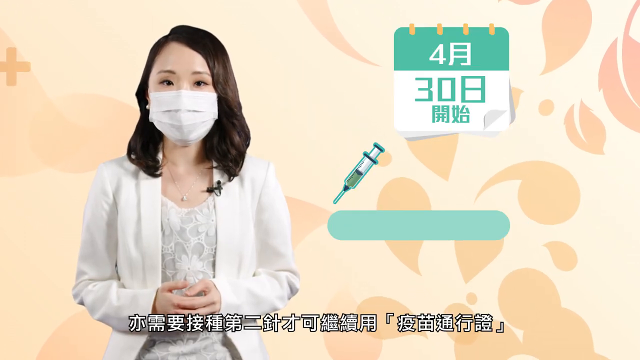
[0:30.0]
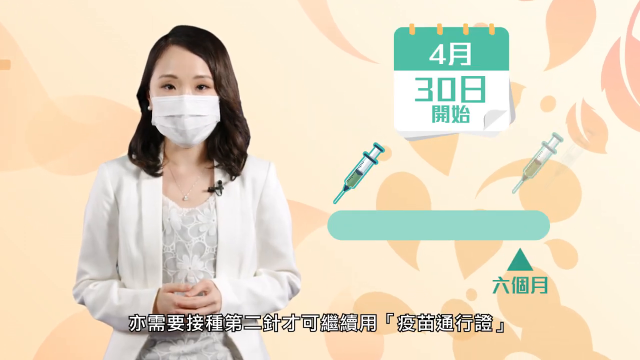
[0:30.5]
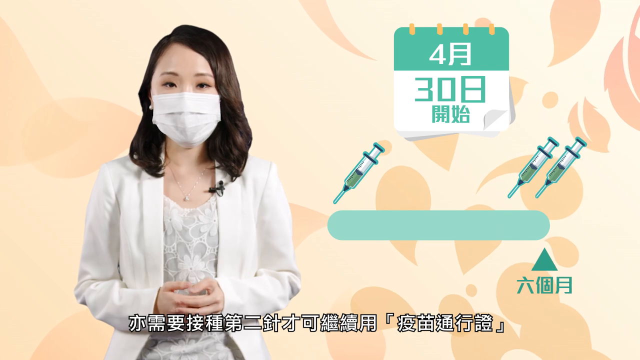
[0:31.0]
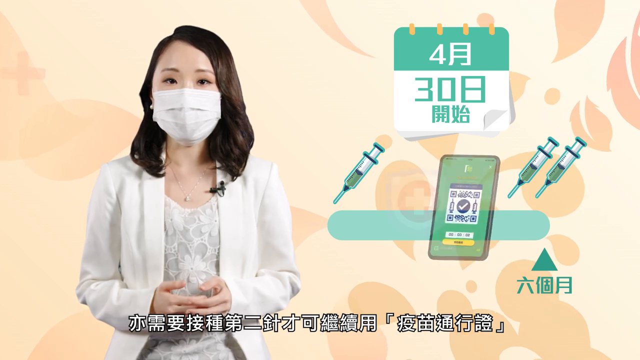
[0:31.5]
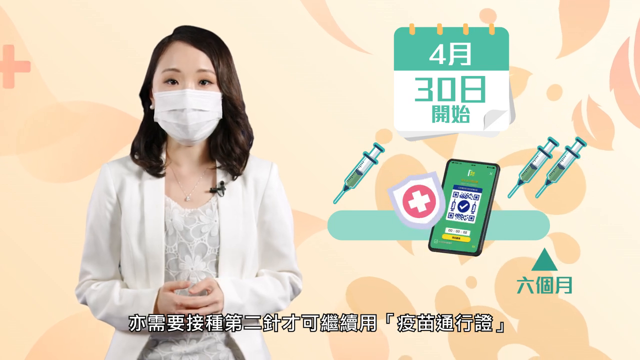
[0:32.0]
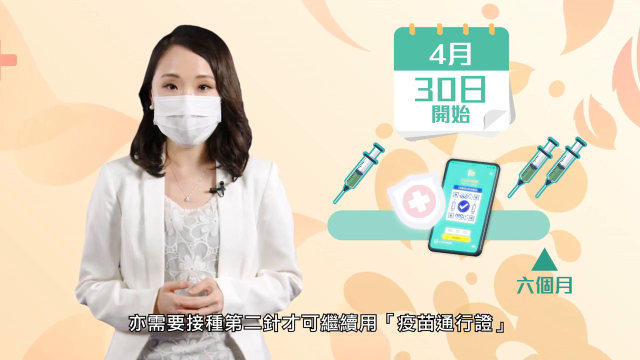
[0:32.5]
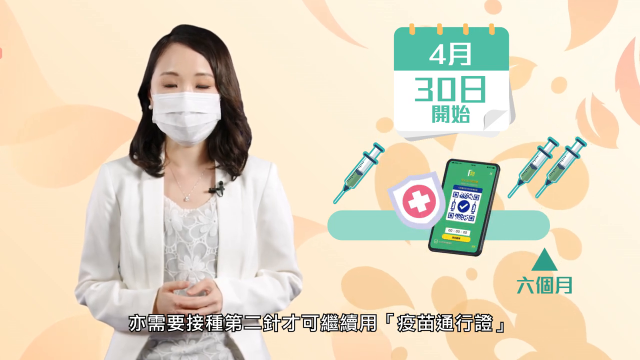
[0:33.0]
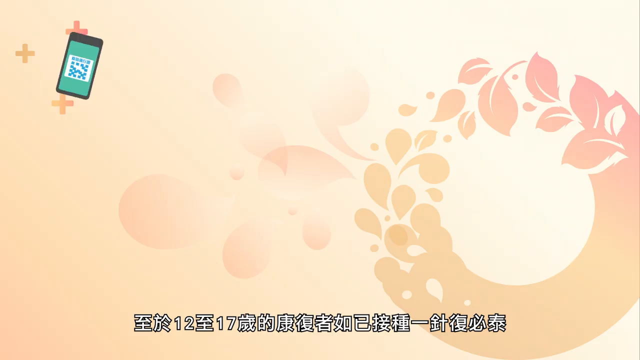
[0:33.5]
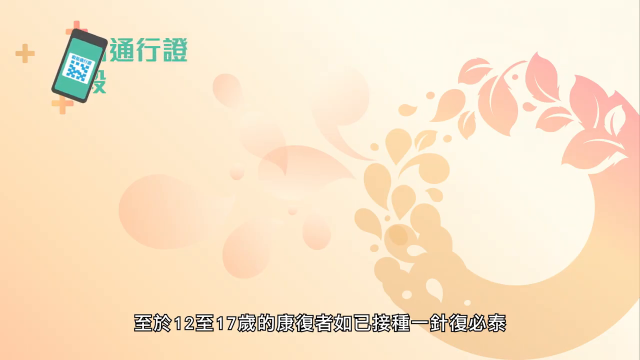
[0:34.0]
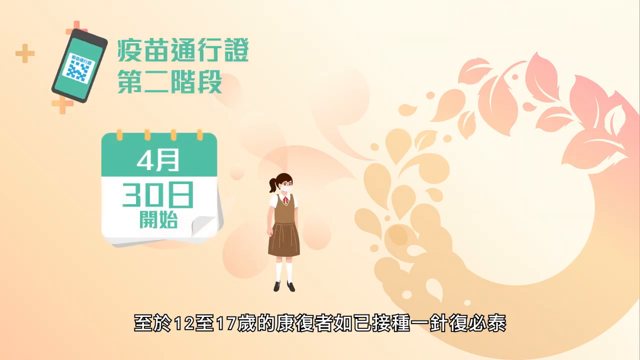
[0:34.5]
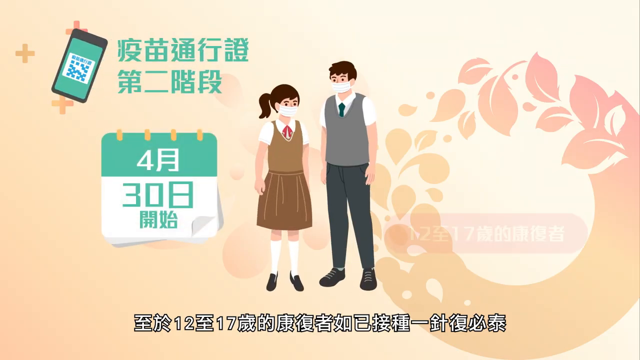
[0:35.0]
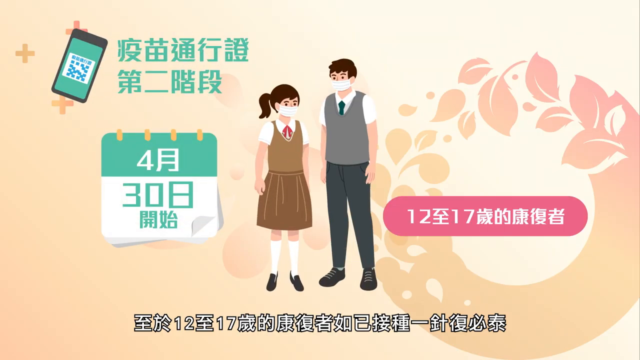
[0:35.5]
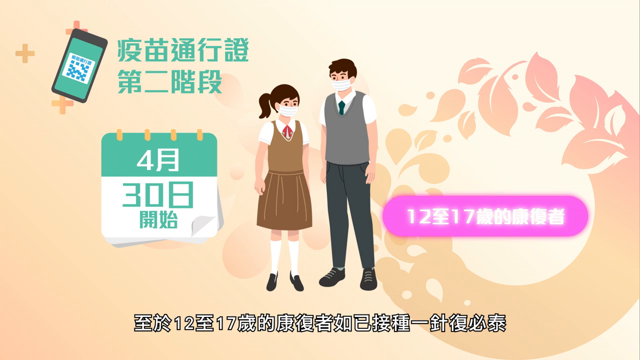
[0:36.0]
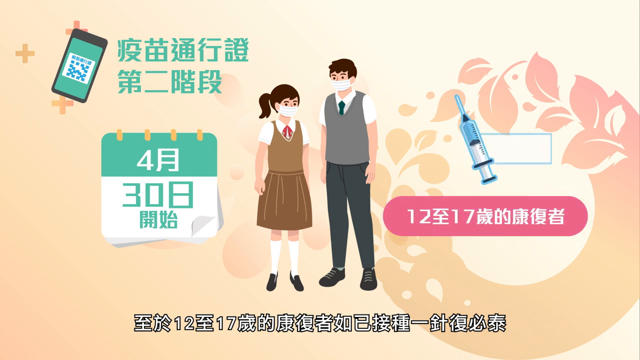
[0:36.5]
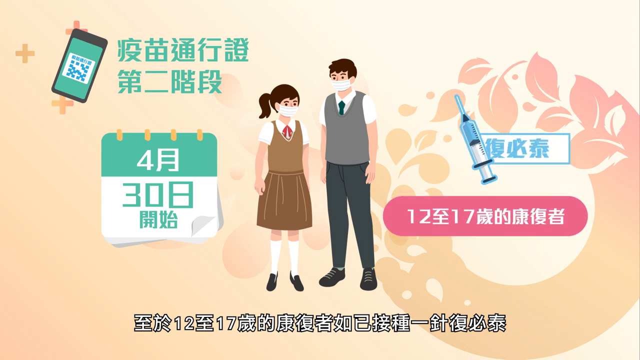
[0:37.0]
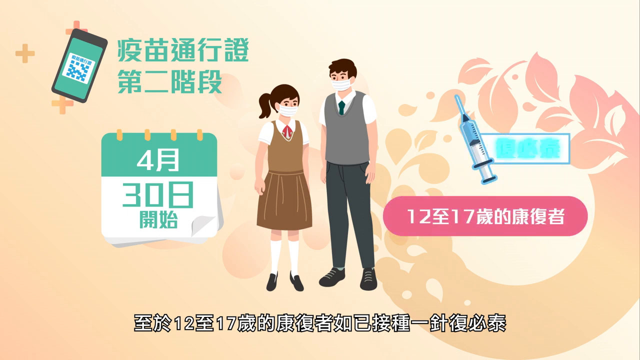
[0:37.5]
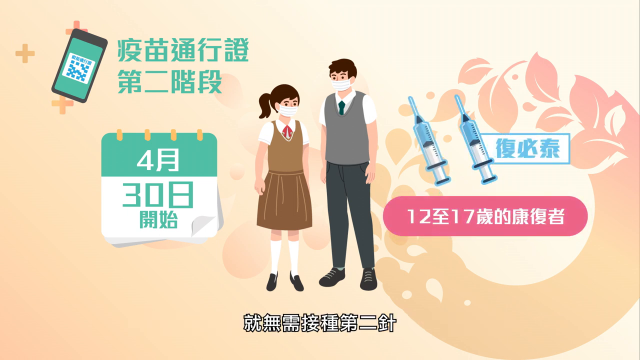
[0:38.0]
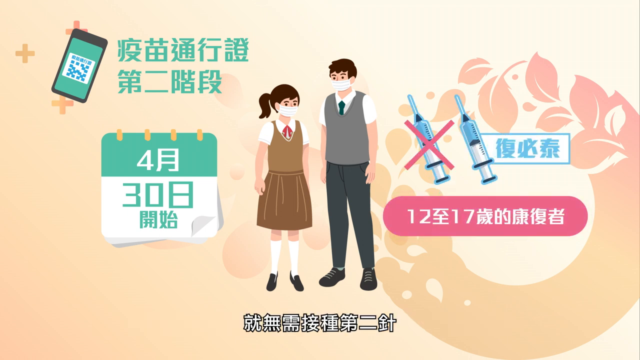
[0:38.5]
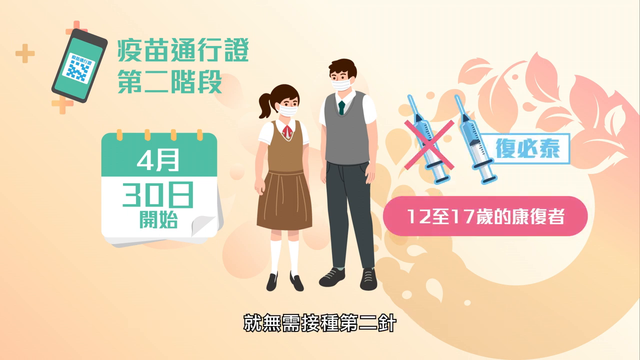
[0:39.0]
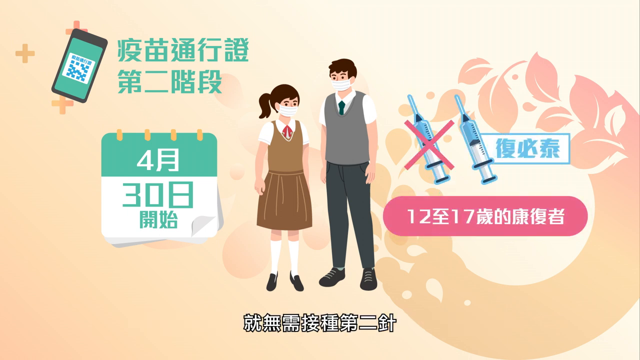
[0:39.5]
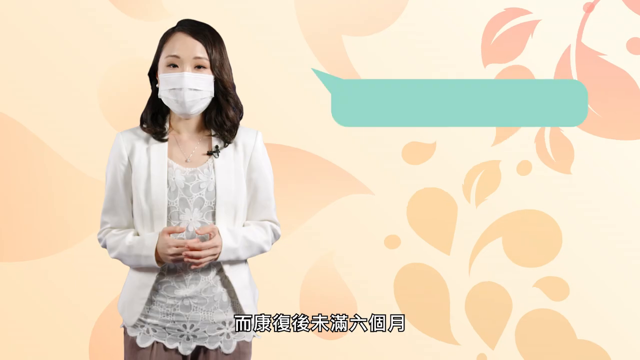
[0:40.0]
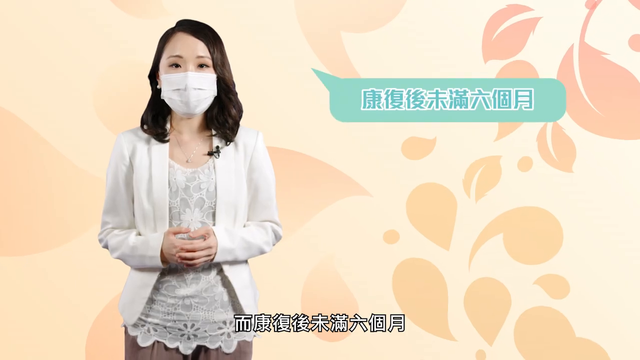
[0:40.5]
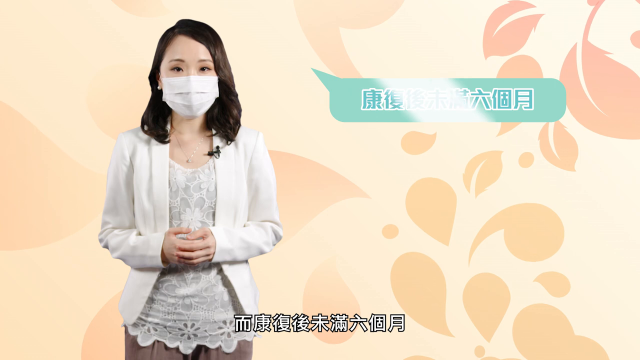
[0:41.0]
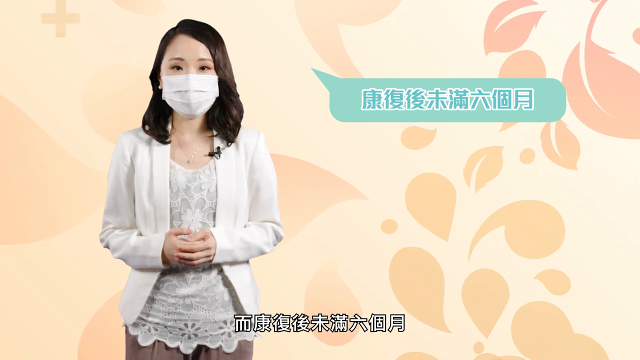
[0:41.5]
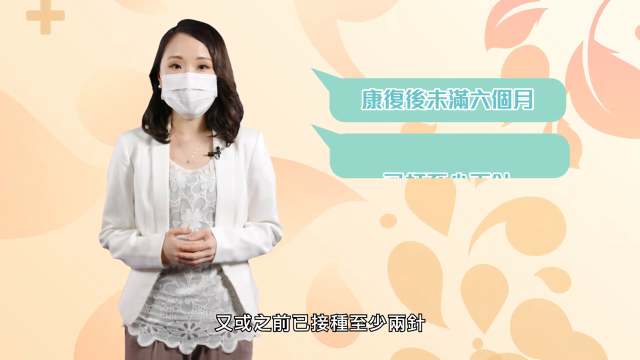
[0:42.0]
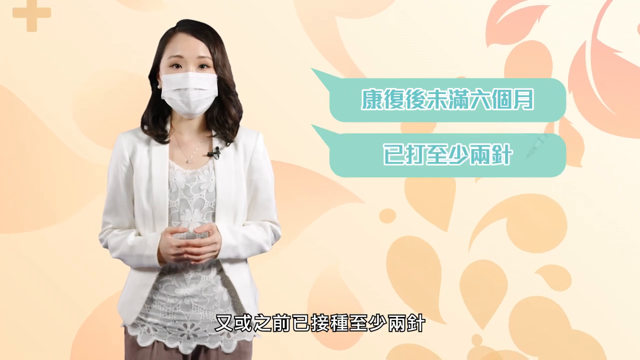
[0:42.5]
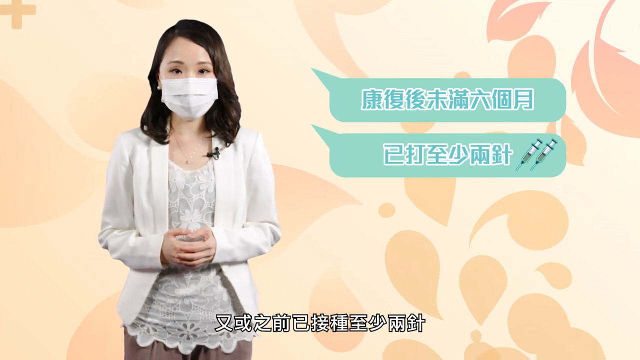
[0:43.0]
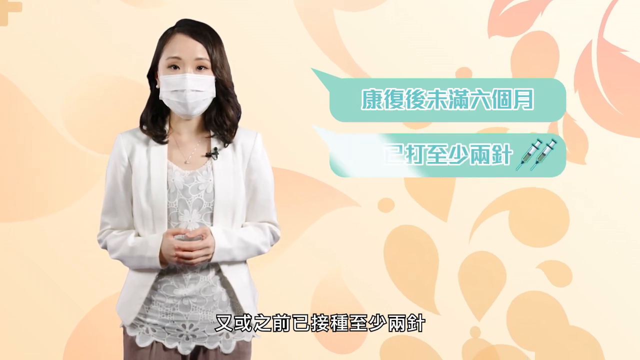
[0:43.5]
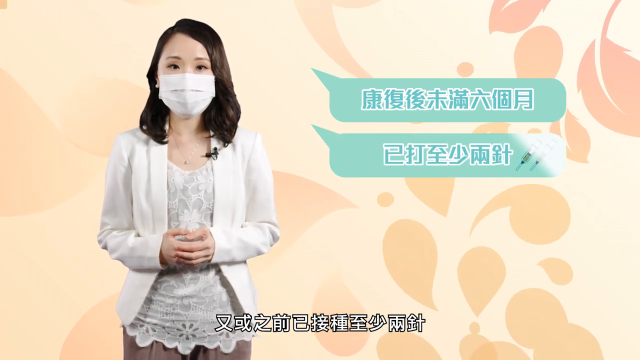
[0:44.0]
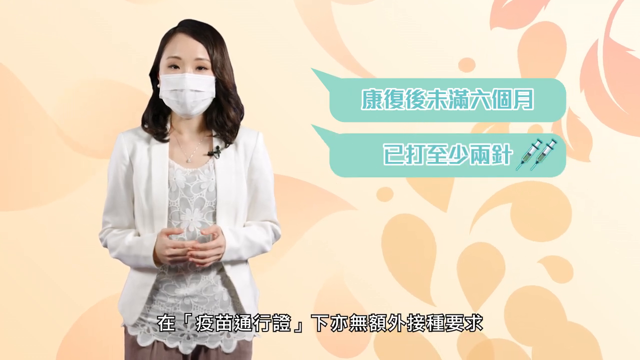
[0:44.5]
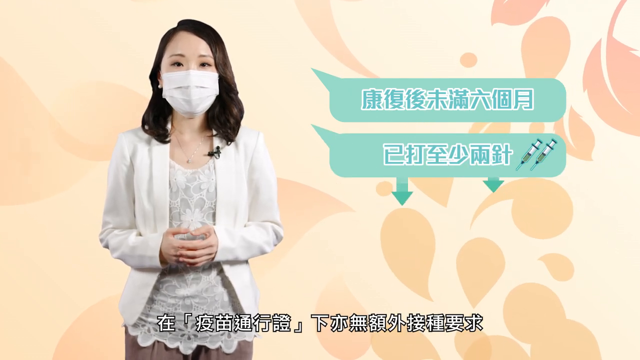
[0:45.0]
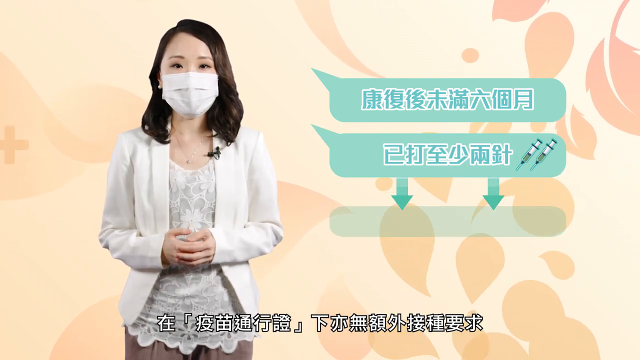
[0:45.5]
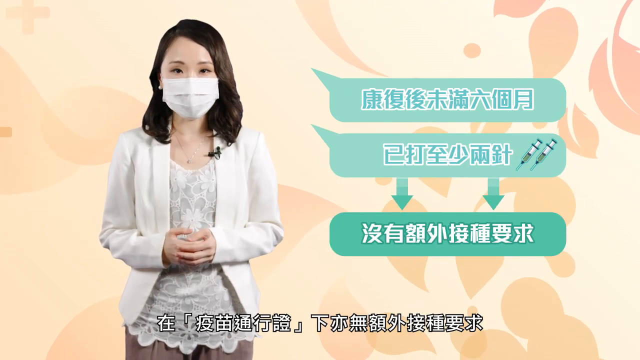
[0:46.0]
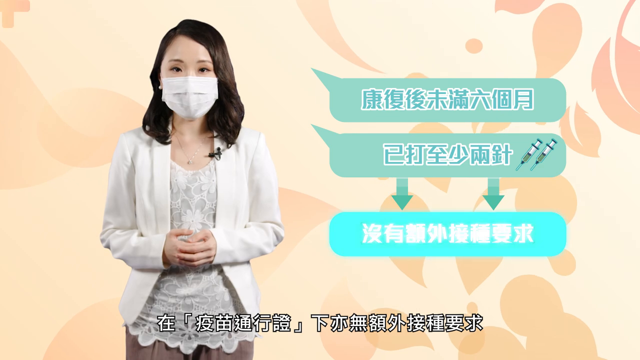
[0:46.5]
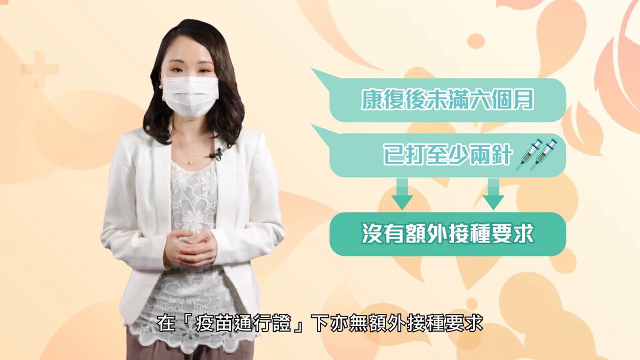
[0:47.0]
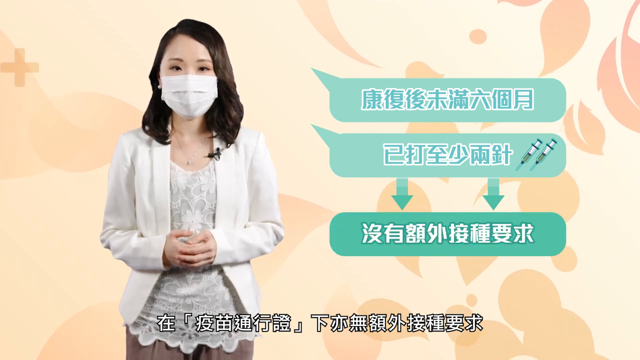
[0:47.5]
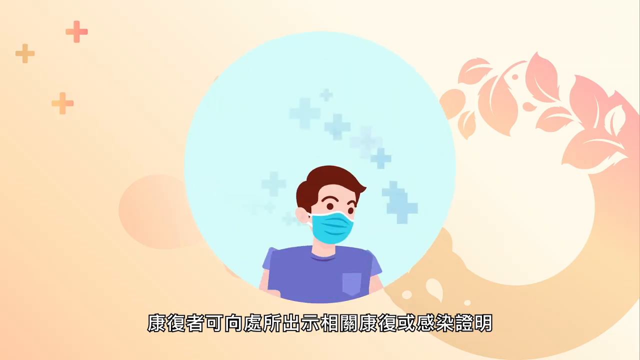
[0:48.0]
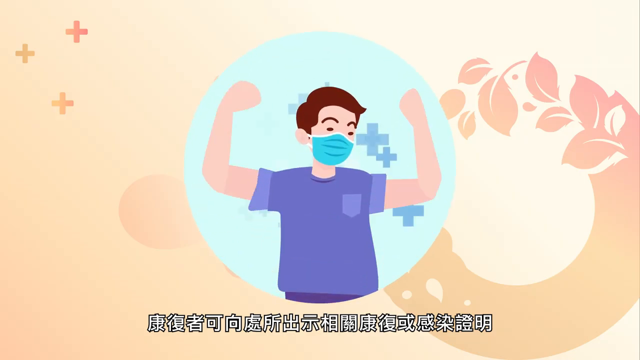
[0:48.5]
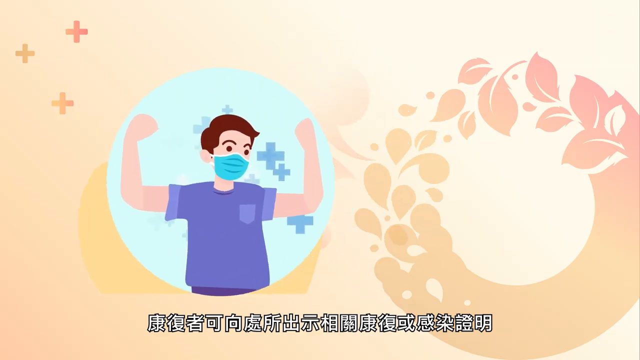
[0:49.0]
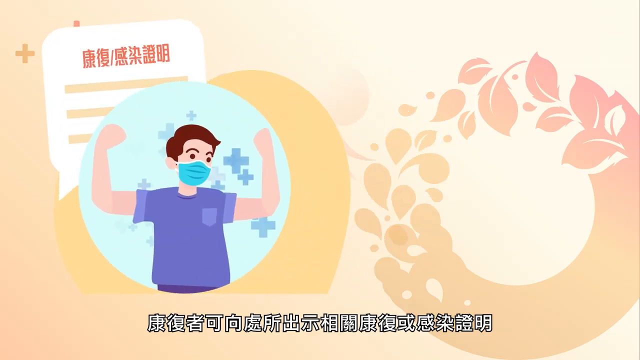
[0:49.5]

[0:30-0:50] A calendar appears alongside the presenter, with needles. Another screen shows characters of a male and a female, both wearing masks. Another calendar and another phone show up, followed by a pink bubble with the numbers "12, 17" and more Japanese writing. Another needle, this one blue, appears with a pop-up, and an X mark goes through one of them on the left. The speaker comes back on screen, and two turquoise, almost thought-bubble-like shapes come up: one with needles and the other with just Japanese writing. Another one with turquoise arrows follows, then a bubble that comes up in blue and turns a darker turquoise, and a circle pops up with the character of the person.